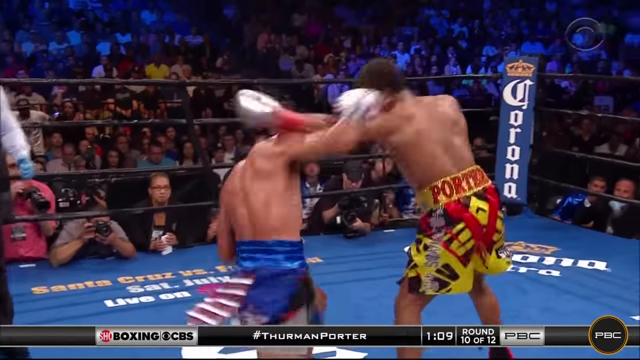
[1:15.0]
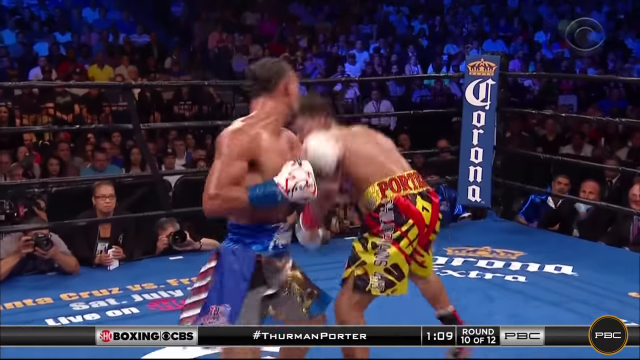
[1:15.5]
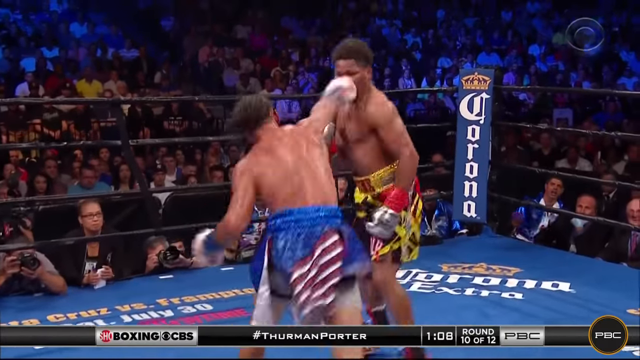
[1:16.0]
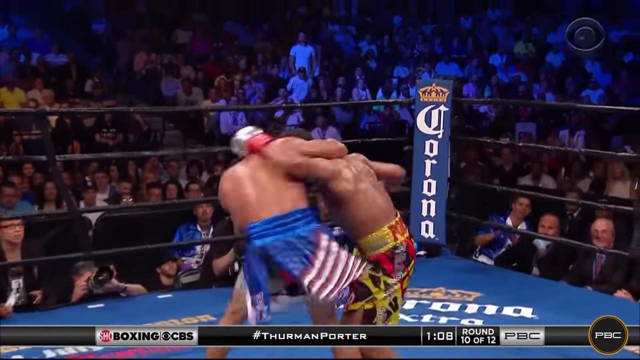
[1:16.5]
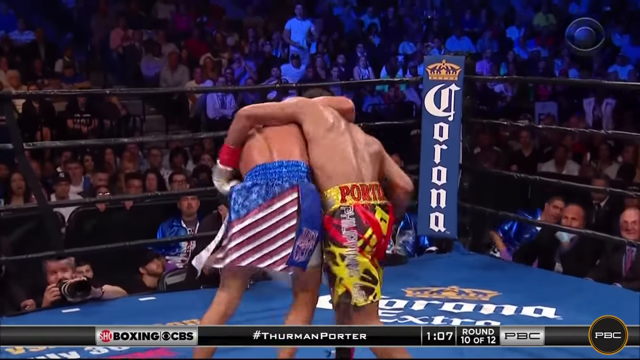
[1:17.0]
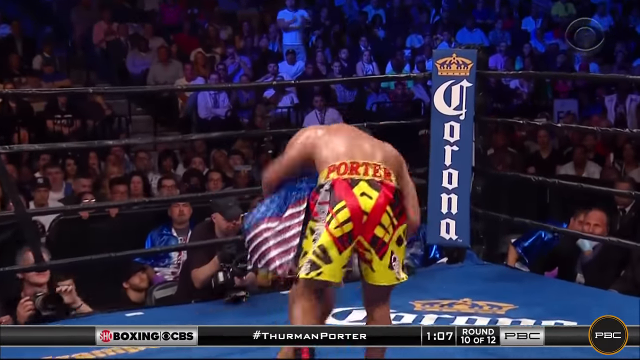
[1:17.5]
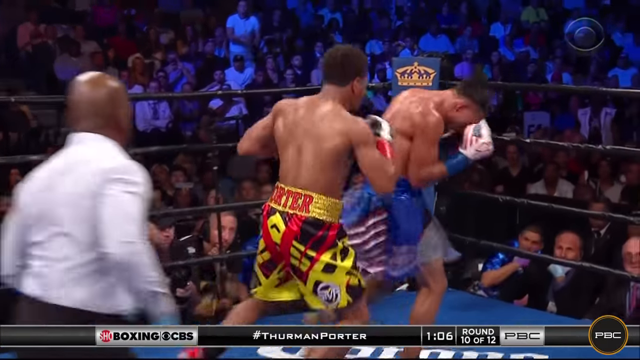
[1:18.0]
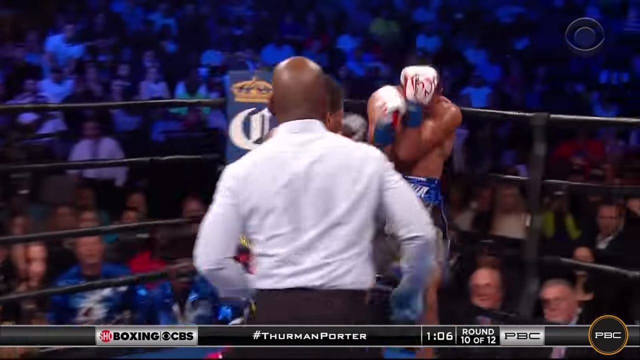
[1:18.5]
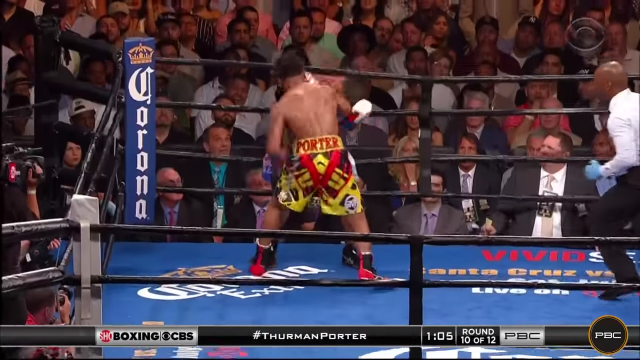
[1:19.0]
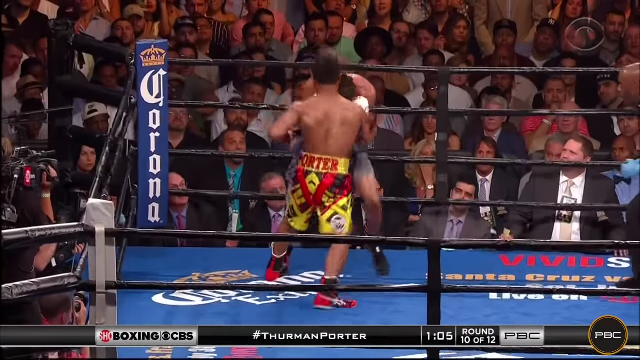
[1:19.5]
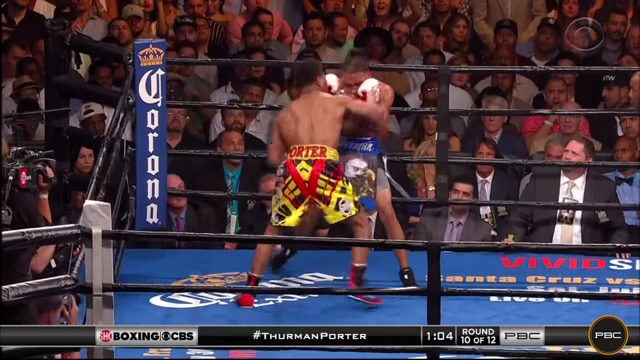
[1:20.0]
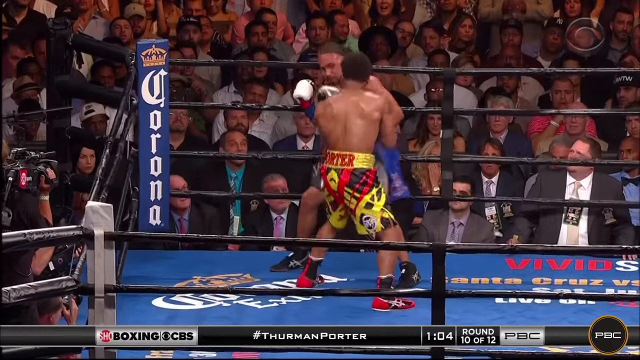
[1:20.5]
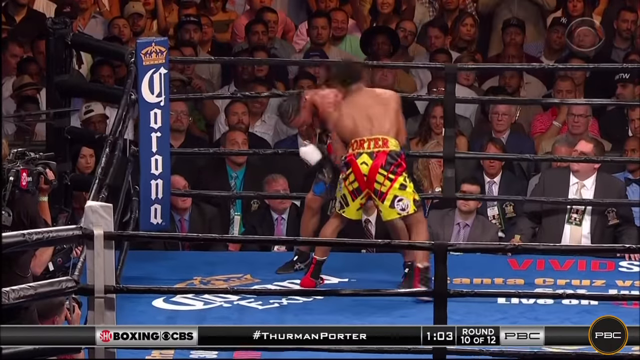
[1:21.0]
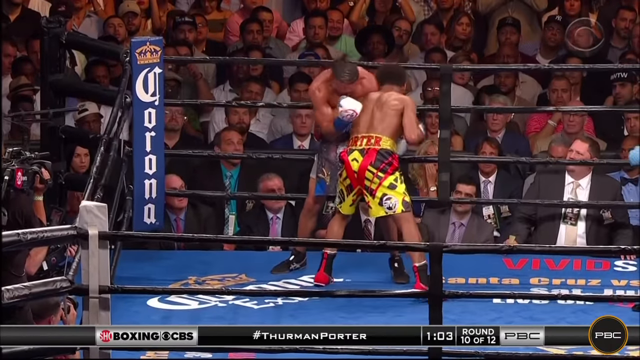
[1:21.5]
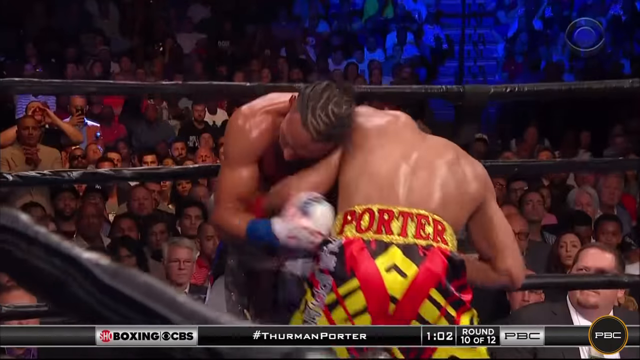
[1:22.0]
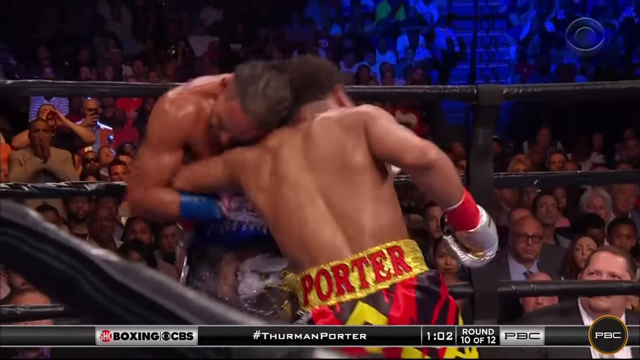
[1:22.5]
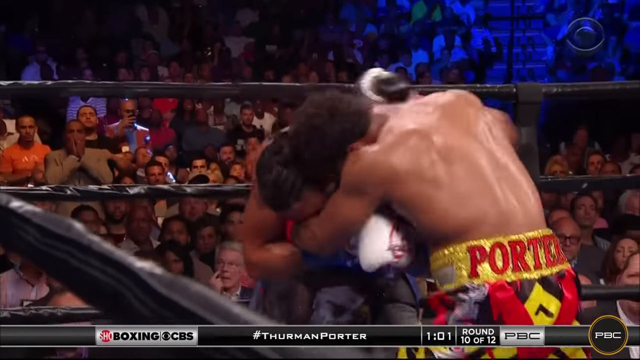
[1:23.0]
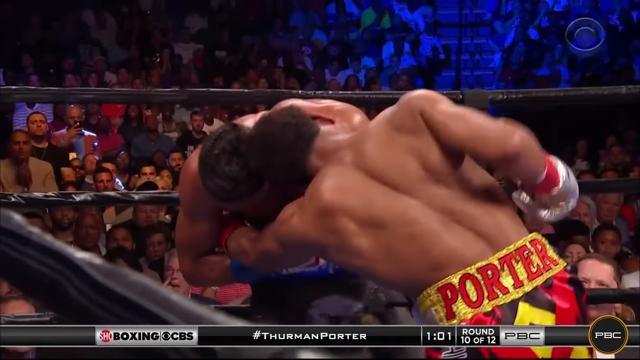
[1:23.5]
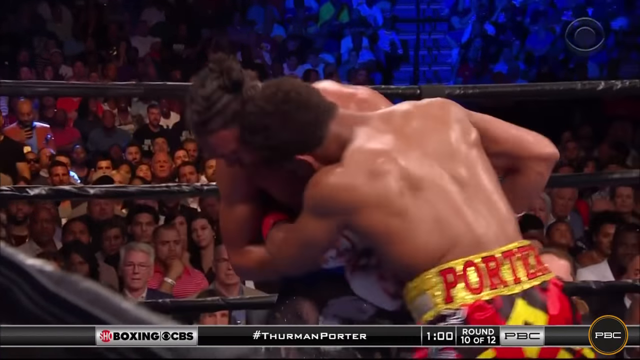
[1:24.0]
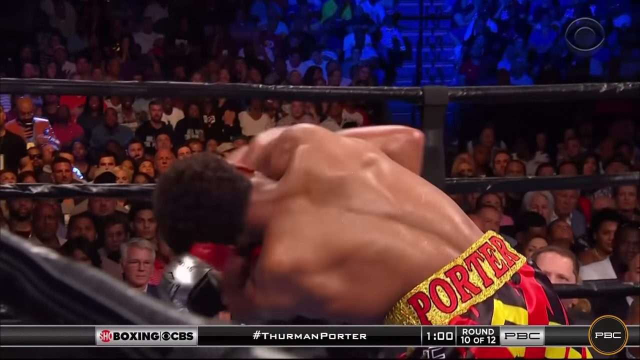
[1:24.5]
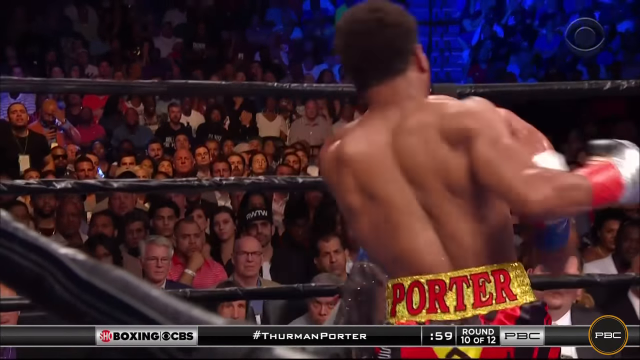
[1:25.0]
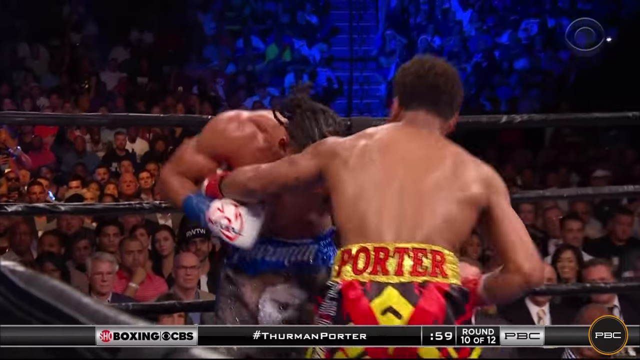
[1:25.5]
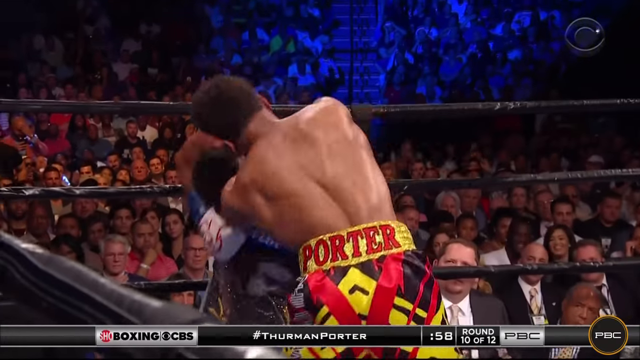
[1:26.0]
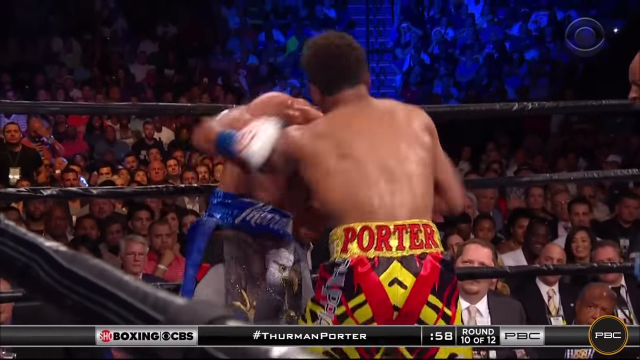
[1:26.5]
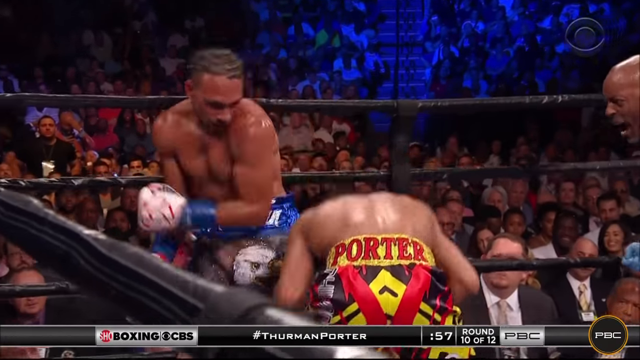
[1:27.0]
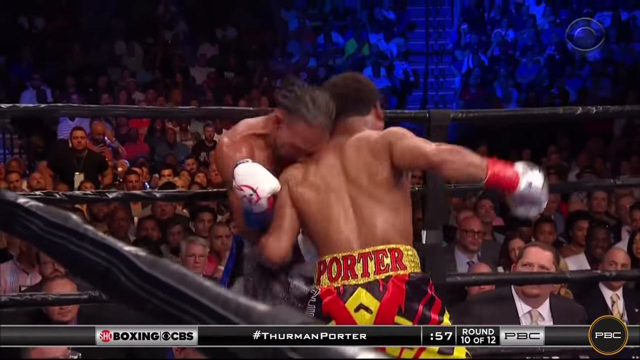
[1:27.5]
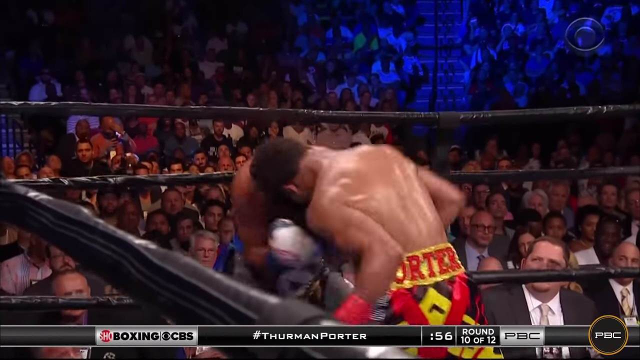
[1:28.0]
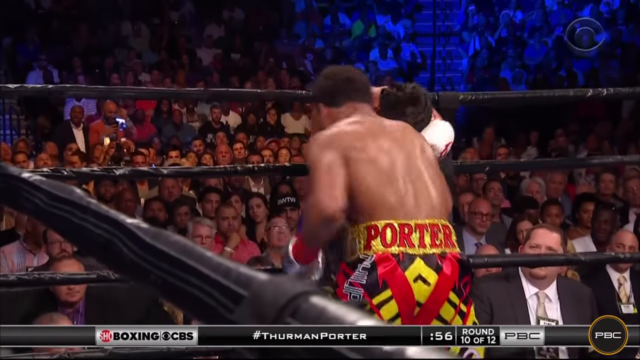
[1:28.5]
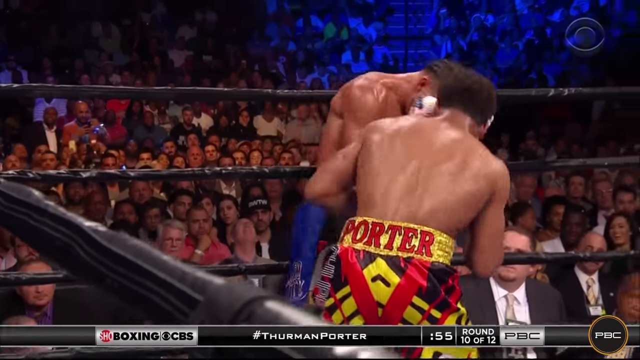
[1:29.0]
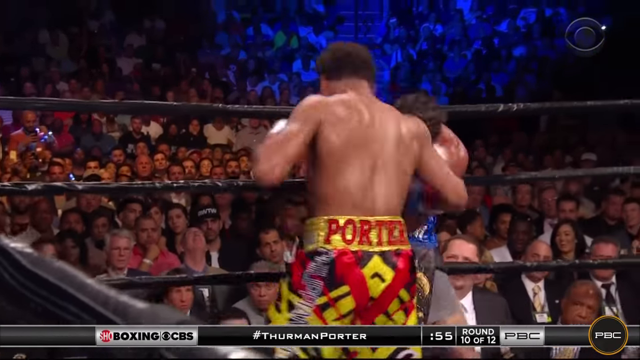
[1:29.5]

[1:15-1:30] The boxer in blue shorts throws wild hooks and punches at the boxer in yellow shorts, who evades them and then begins to wail on the boxer in blue shorts as he is leaned up against the ropes. The boxer in yellow shorts appears to be winning the exchange. They get tangled up as the boxer in blue shorts grabs the yellow-shorted boxer's left arm, but the boxer in yellow and black shorts keeps throwing large punches with his right hand. The graphic shows round 10 of 12 with about 1 minute remaining, and the time slowly ticks down from there. While the boxer in blue shorts holds onto his arm, their heads lean very close together and they lean against each other as the boxer in yellow and black shorts tries to pull his left arm away while throwing right-handed power punches. Afterward they meet in the middle of the ring and appear to grab each other as they get tangled up once again.